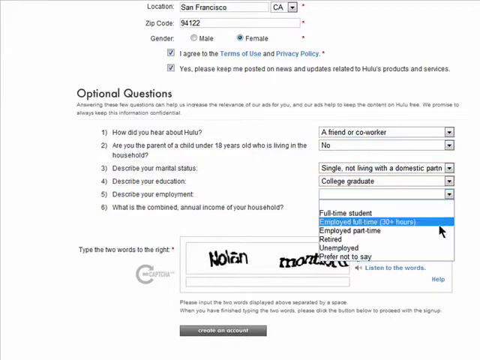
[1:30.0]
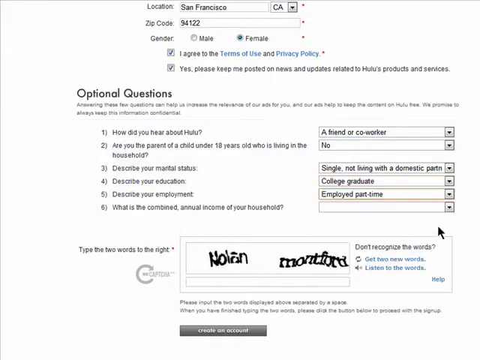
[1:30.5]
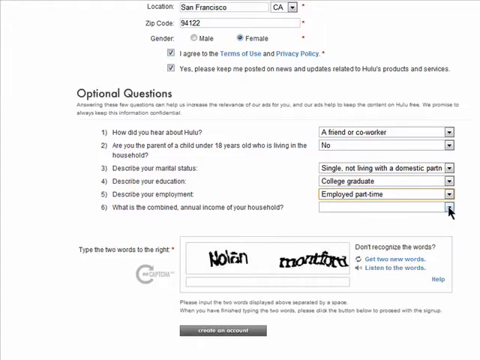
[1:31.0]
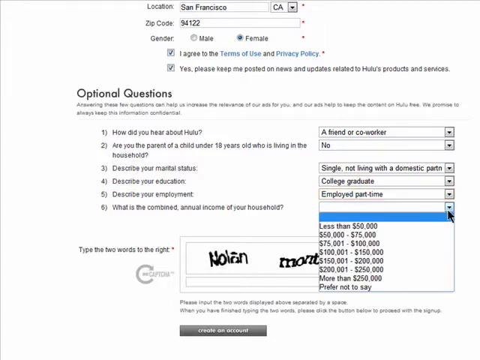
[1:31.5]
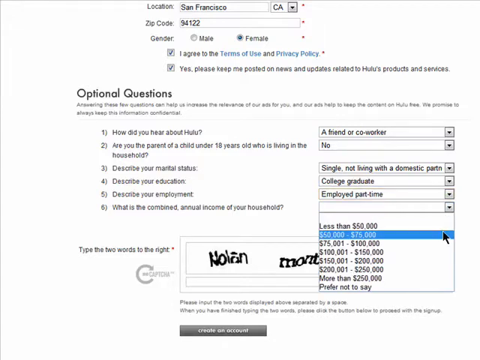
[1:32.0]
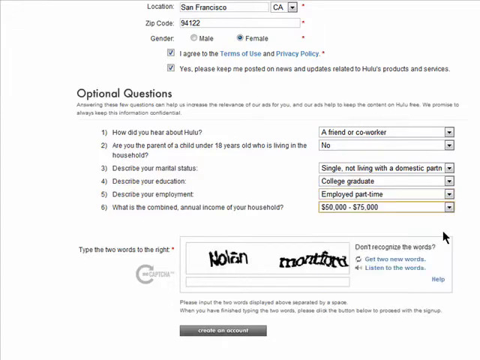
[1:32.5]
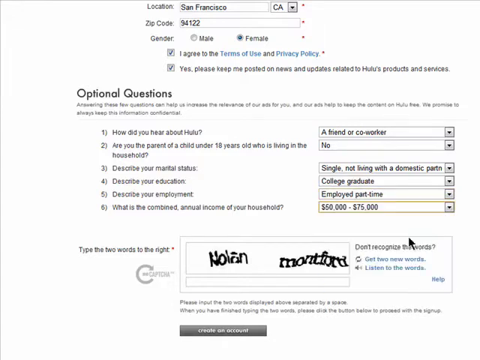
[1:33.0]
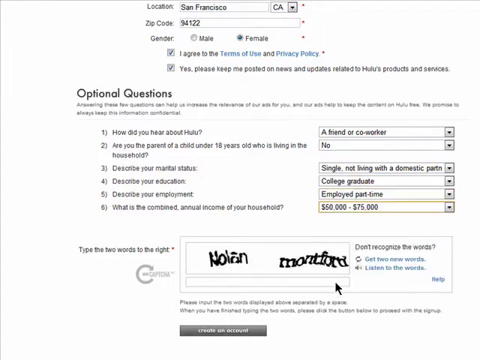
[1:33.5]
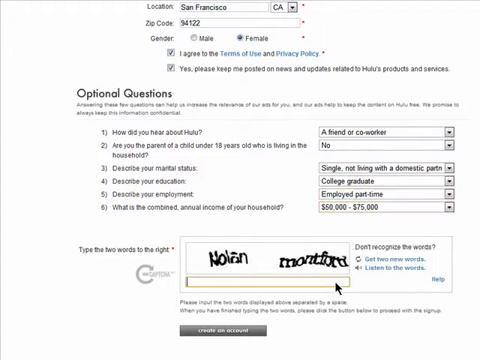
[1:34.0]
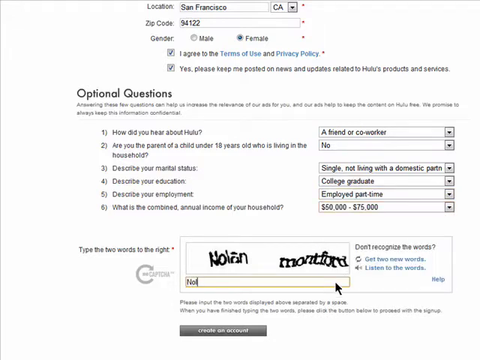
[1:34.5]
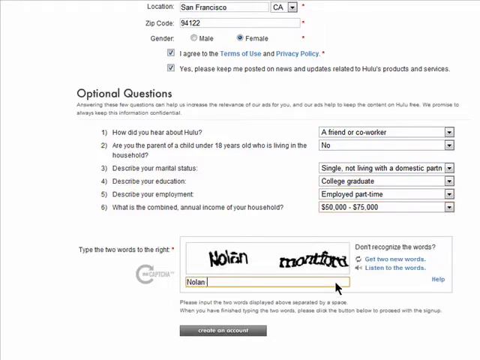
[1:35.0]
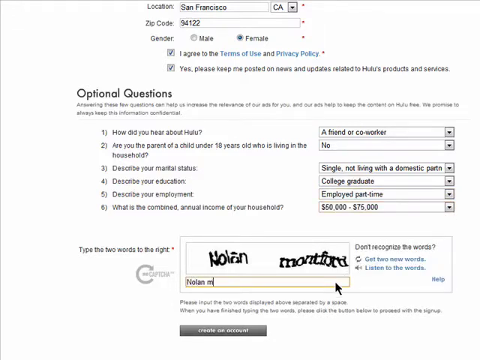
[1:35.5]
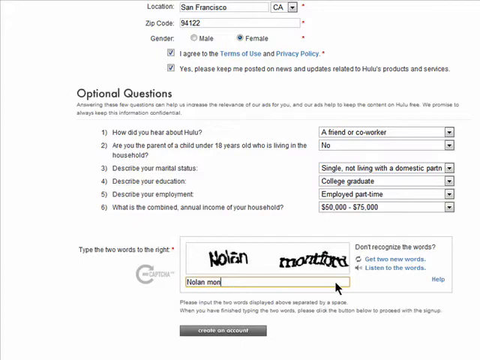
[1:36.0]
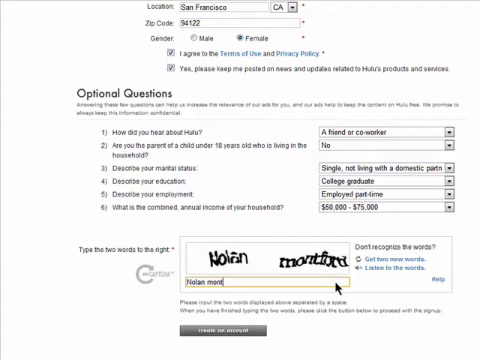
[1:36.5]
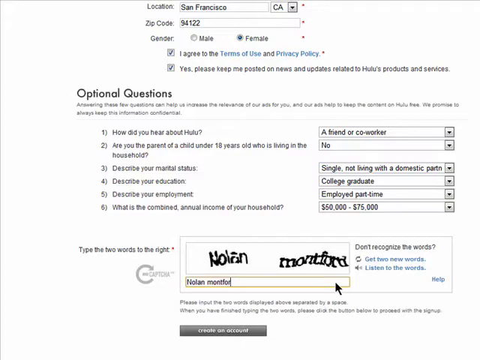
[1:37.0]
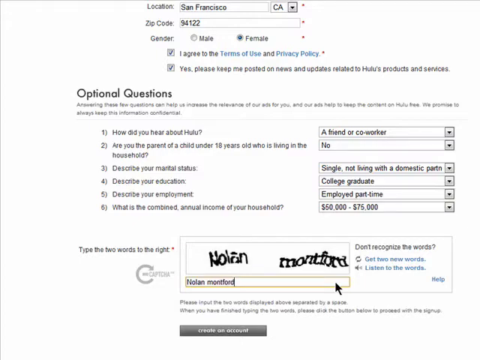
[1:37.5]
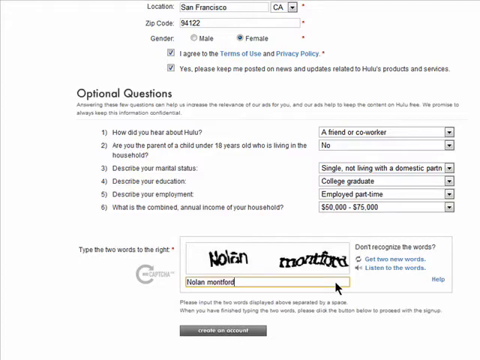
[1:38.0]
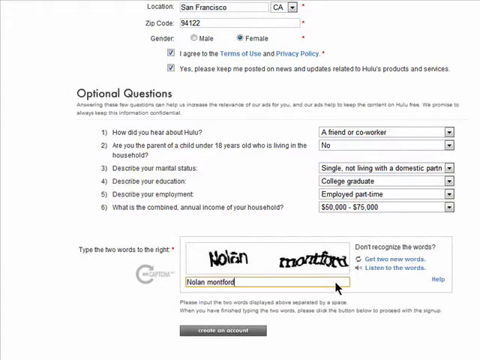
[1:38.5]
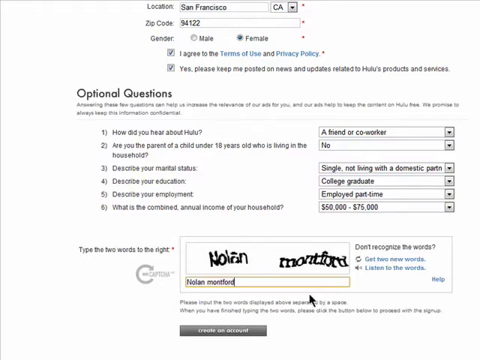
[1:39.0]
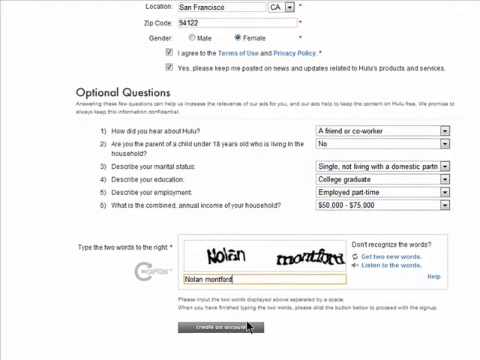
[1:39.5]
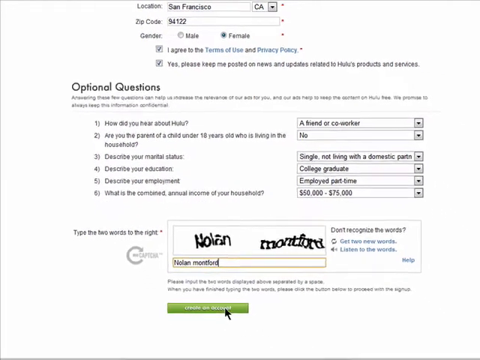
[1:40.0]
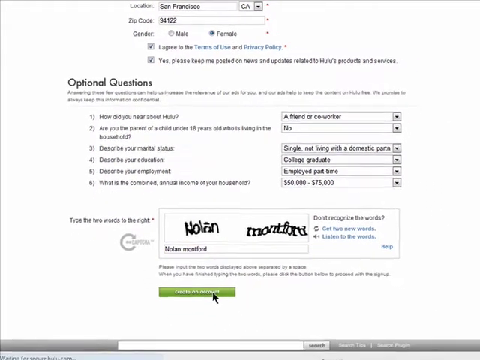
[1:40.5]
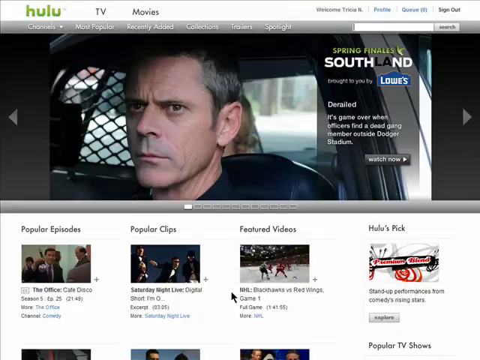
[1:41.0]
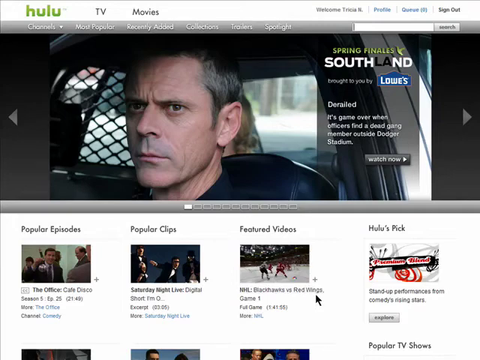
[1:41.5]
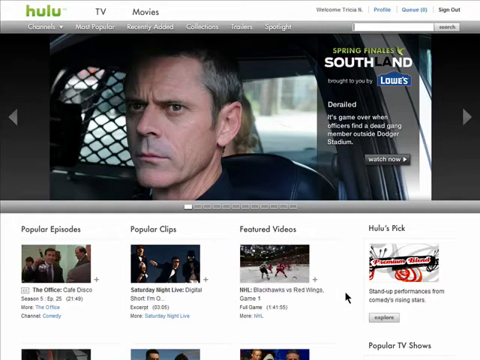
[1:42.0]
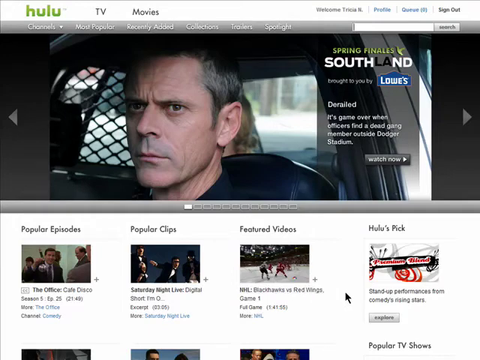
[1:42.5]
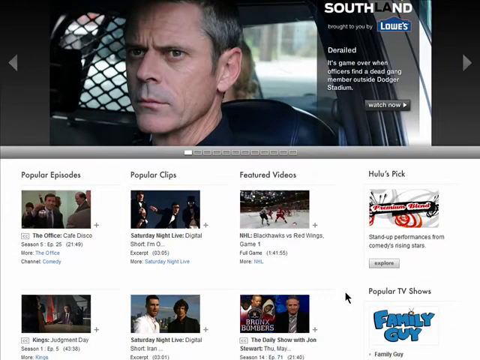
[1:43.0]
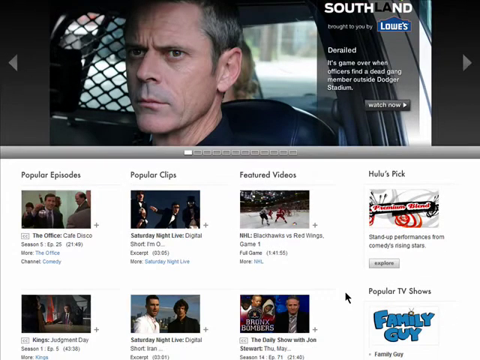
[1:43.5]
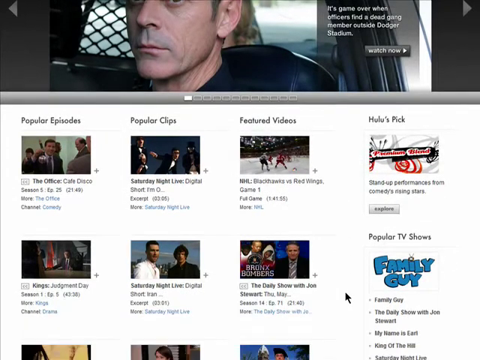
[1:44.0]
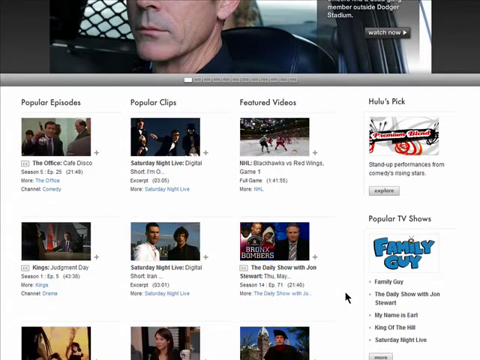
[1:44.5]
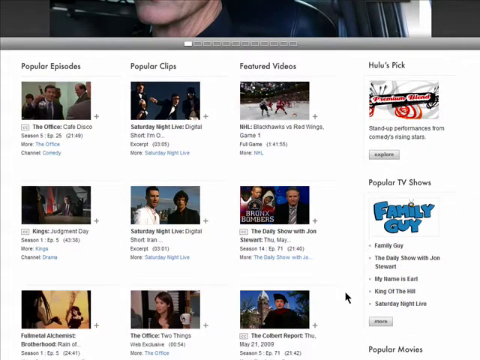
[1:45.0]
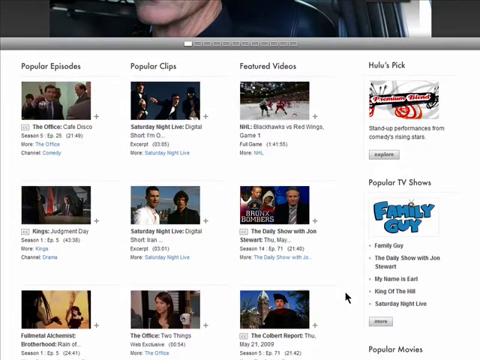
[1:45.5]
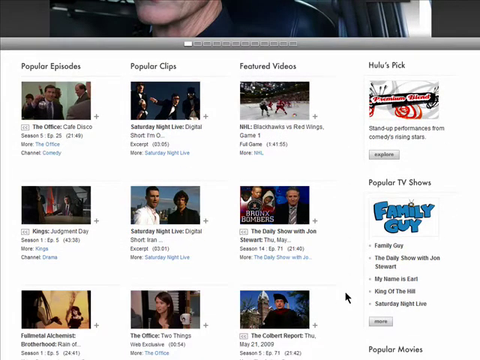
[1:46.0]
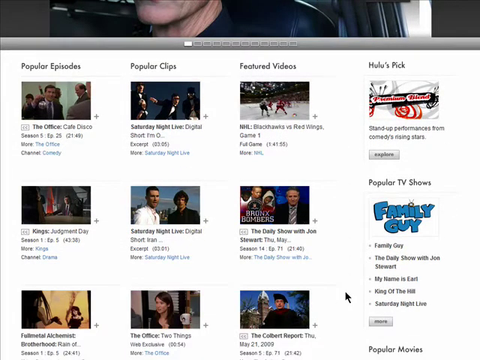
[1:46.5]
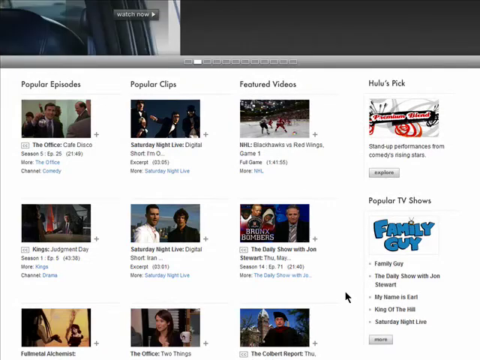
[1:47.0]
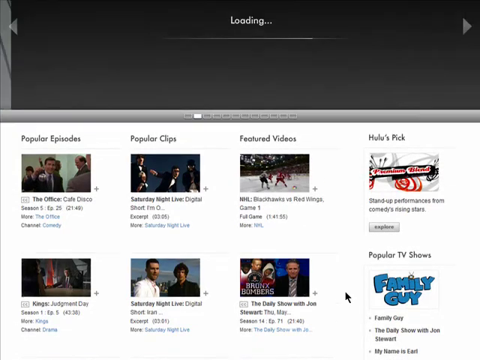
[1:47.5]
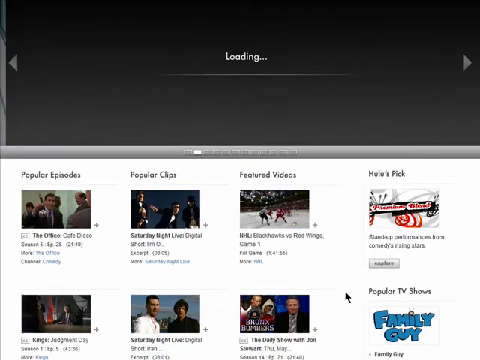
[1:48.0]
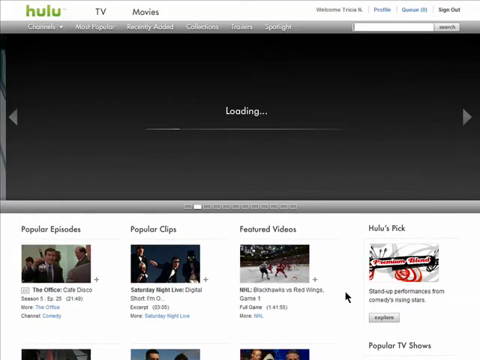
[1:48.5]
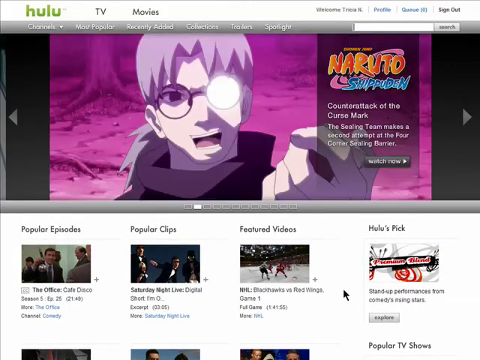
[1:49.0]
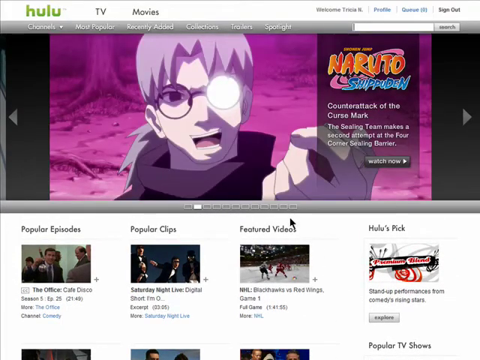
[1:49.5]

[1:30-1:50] The screen shows the optional questions. "How did you hear about Hulu?" is answered with a friend or co-worker. "Are you the parent of a child under 18 years old who is living in the household?" is answered no. "Describe your marital status" is answered single, not living with a domestic partner. The fourth is answered college graduation. "Describe your employment" is answered part-time, and "what is the combined annual income of your household?" is answered $50,000 to $75,000. Under "type two words to the right" there are two words to type; she types "Nolan Montfort" and clicks the create account button. She is taken back to the Hulu main screen, with popular episodes, popular clips, featured videos and Hulu pics, and she is signed in. She scrolls down, and then another screen appears, from Naruto.